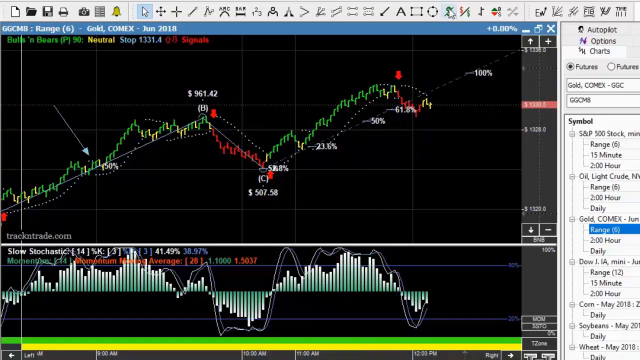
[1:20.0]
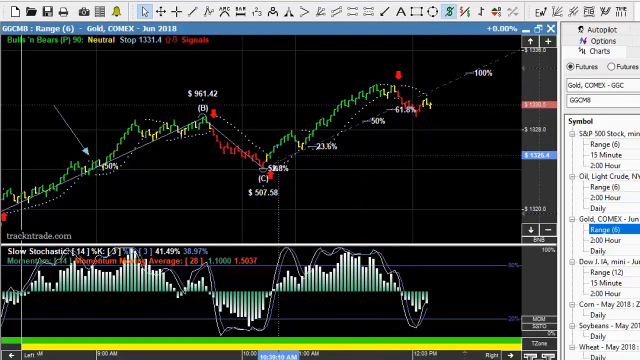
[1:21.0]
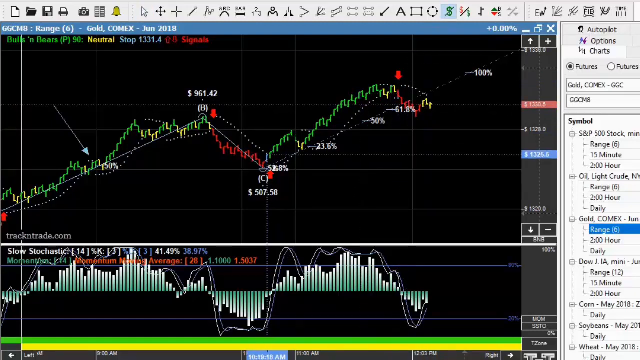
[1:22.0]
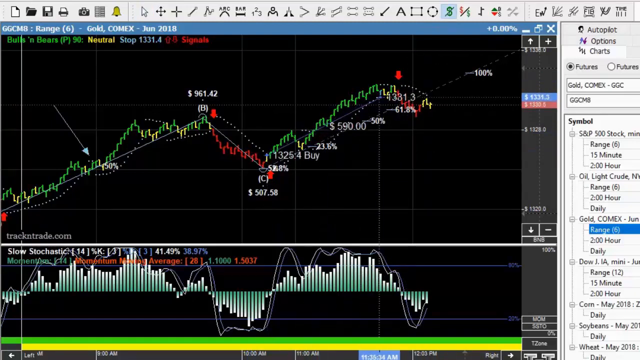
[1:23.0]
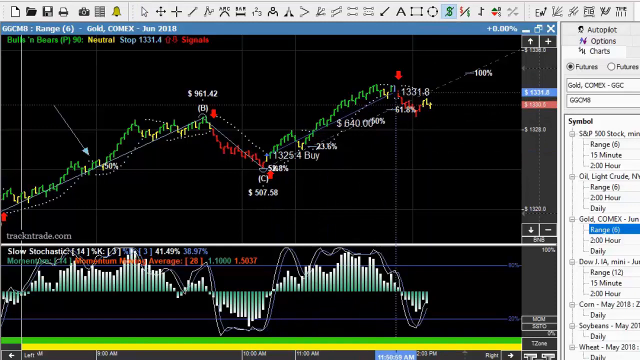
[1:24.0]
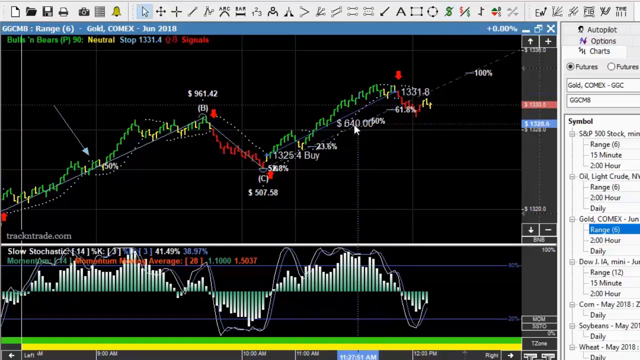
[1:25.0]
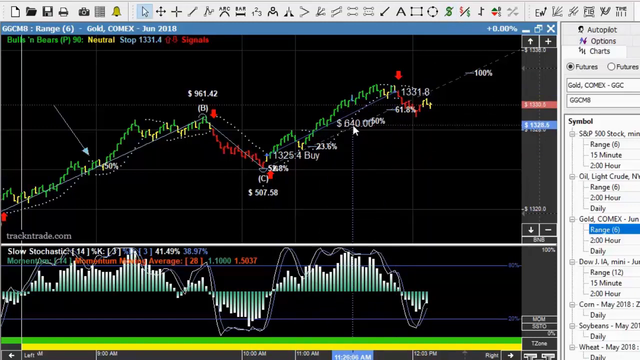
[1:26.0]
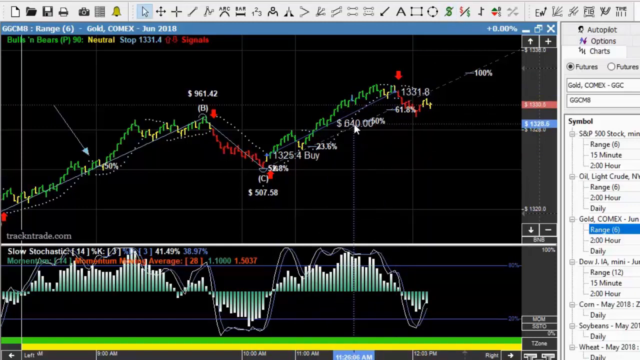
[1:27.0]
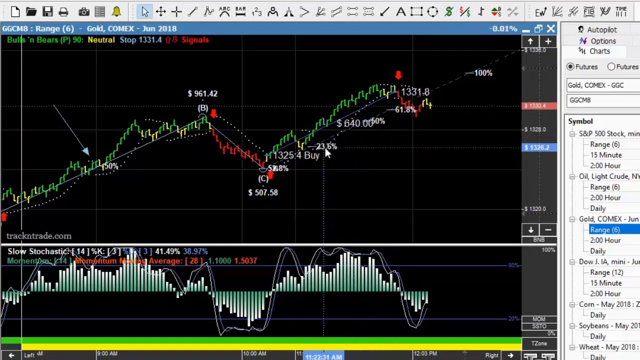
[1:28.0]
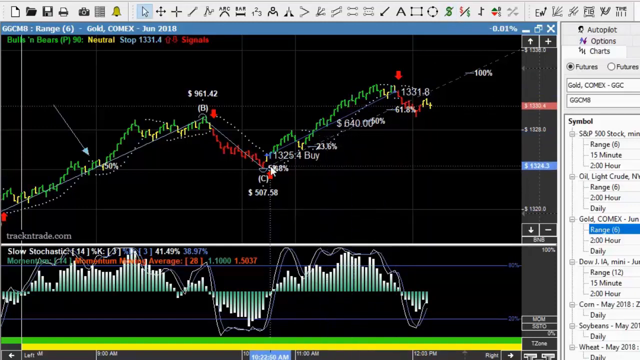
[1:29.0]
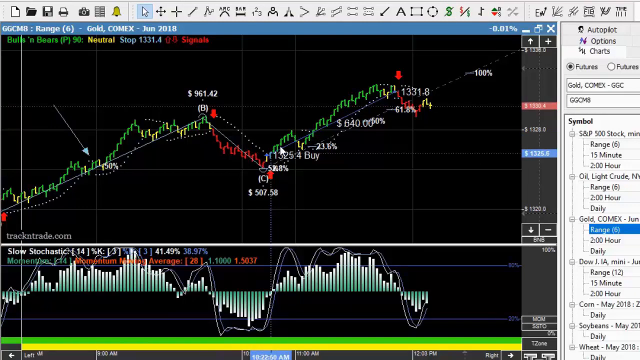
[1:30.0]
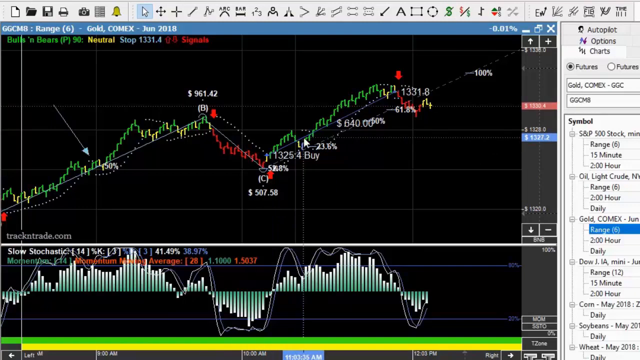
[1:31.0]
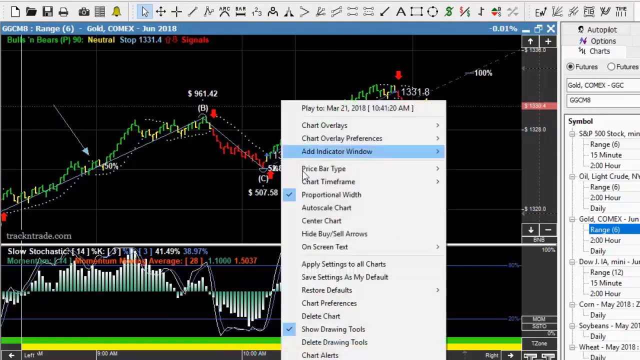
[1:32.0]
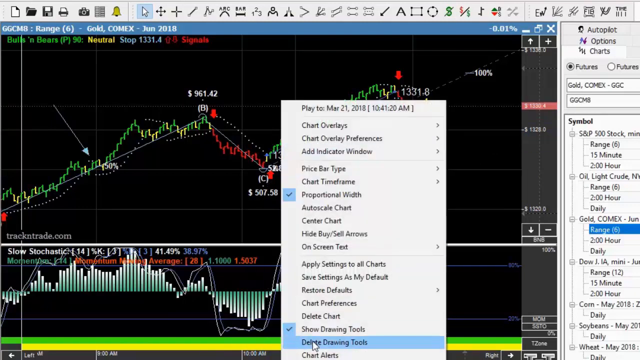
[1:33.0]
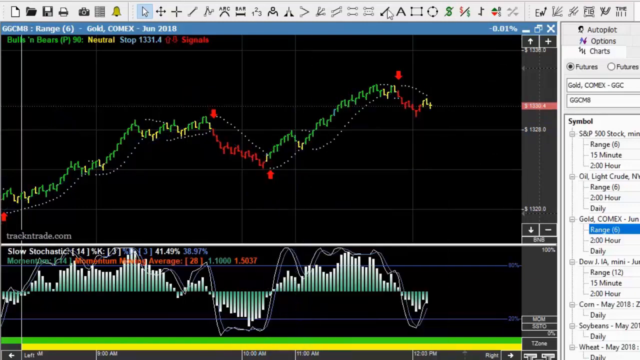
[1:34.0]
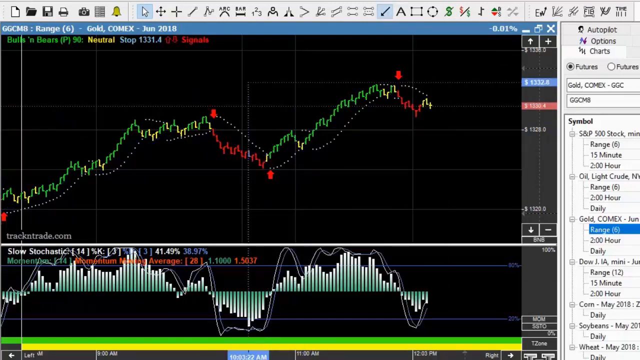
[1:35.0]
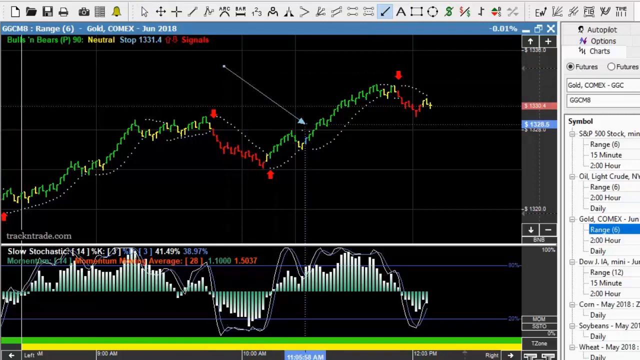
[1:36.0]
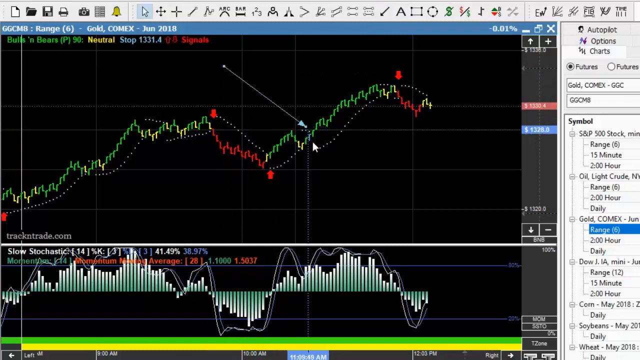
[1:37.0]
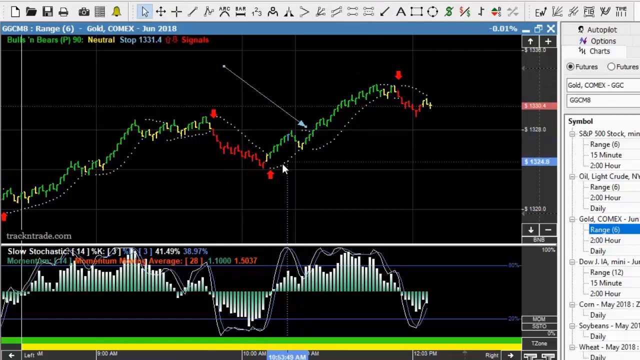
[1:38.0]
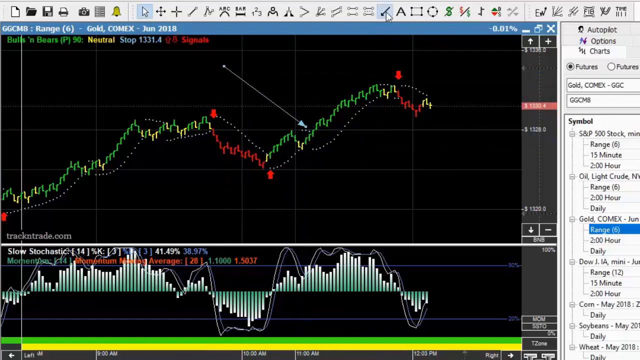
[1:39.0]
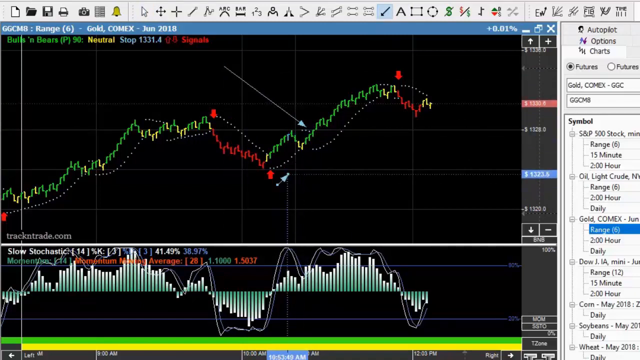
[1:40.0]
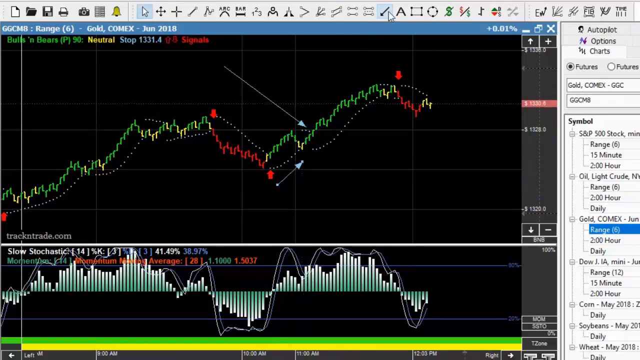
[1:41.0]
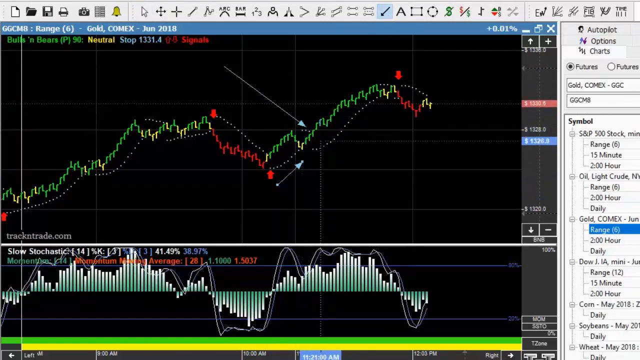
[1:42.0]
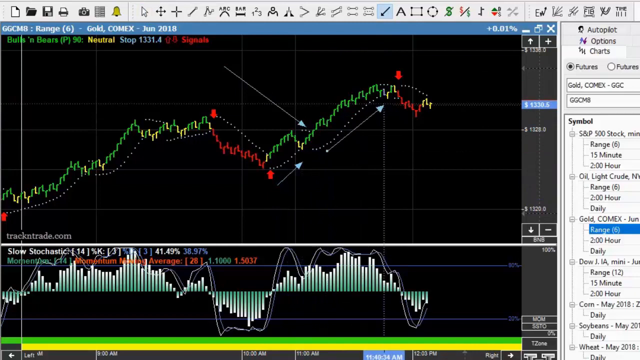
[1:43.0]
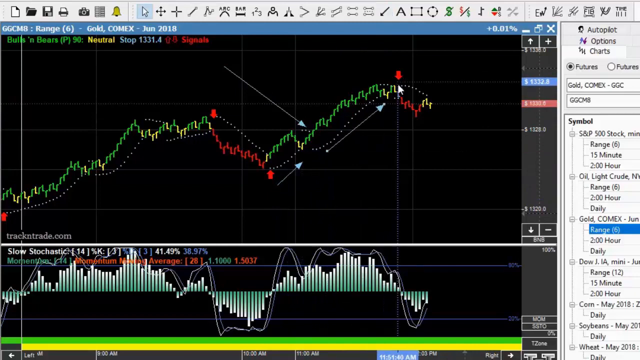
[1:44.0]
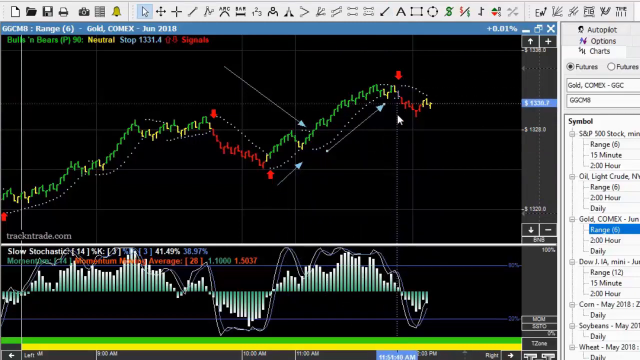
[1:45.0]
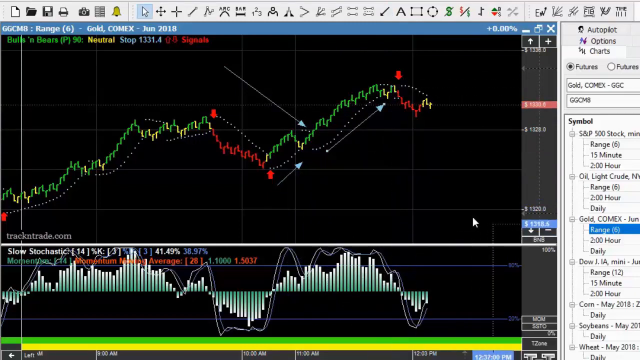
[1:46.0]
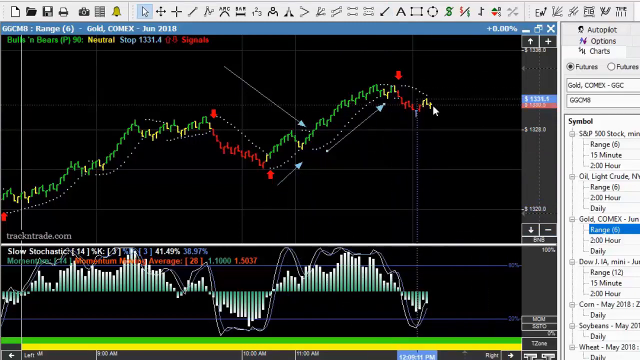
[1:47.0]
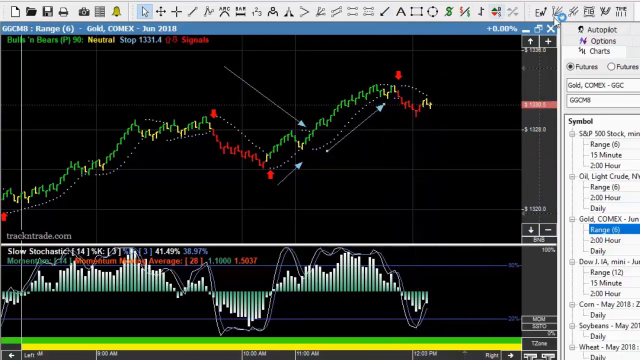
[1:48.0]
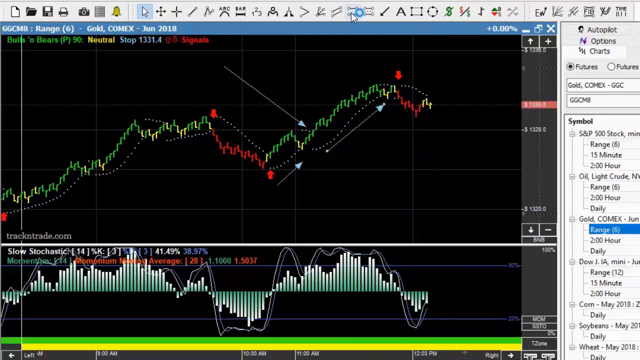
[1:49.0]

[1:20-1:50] On a black screen is a green, yellow and red graph that starts on the left and moves to the right on a mainly upward trajectory. A blue box moves on the right, and a line is drawn from its center to the top right, with corresponding numbers. The pointer changes to a white mouse cursor that highlights 640, stays there, then moves a little down toward the bottom left, further toward the bottom left, and starts circling an area in the center. It right-clicks, bringing up a menu, and highlights "delete drawing tools". The cursor then goes up to the top, clicks the pencil, and begins drawing a new tool, drawing down and to the right, then moving around again. It keeps clicking that tool and drawing more lines, drawn roughly toward the center of the image.